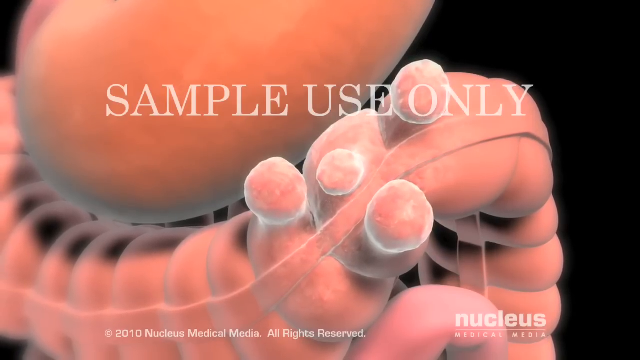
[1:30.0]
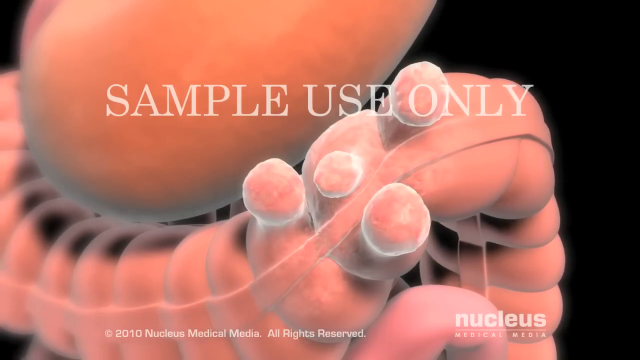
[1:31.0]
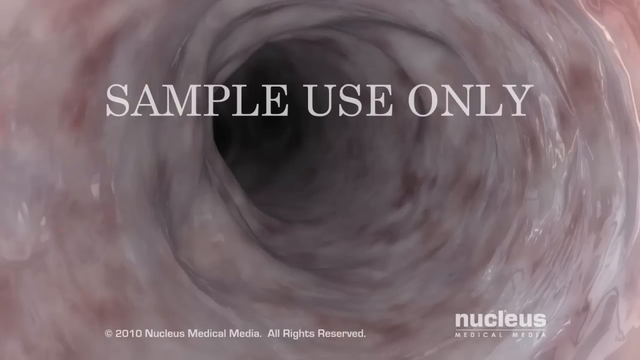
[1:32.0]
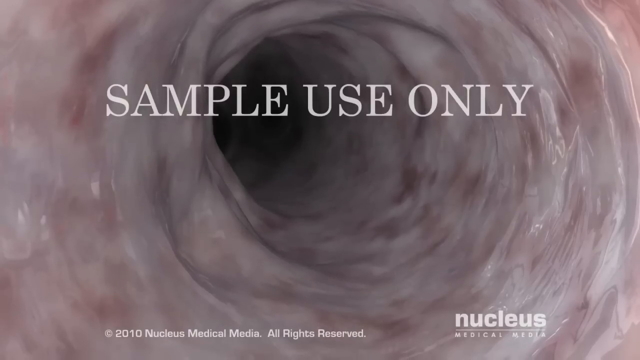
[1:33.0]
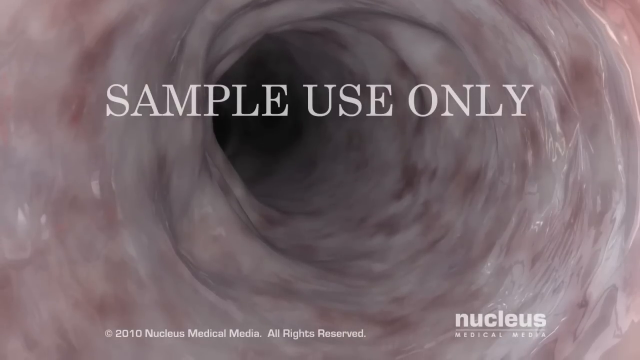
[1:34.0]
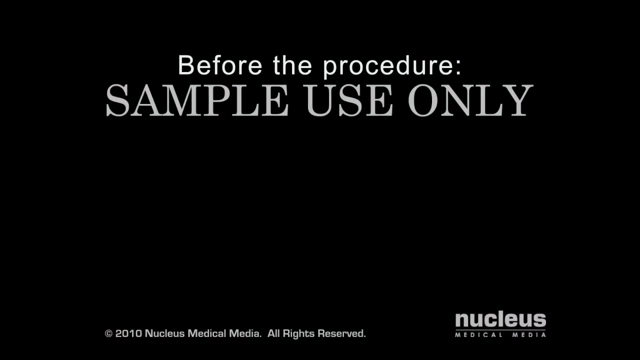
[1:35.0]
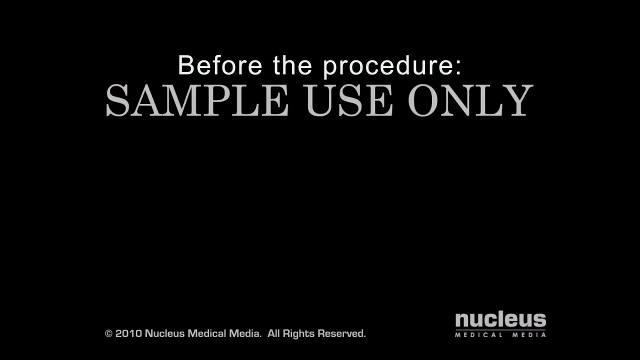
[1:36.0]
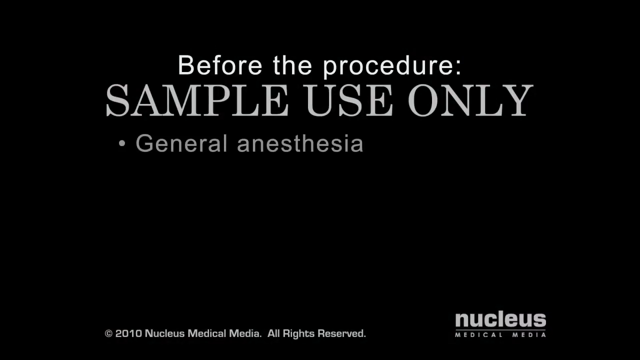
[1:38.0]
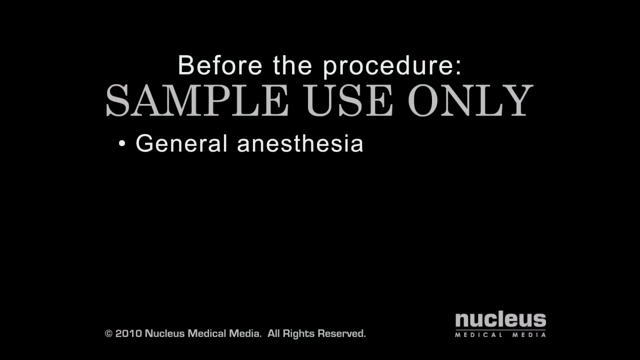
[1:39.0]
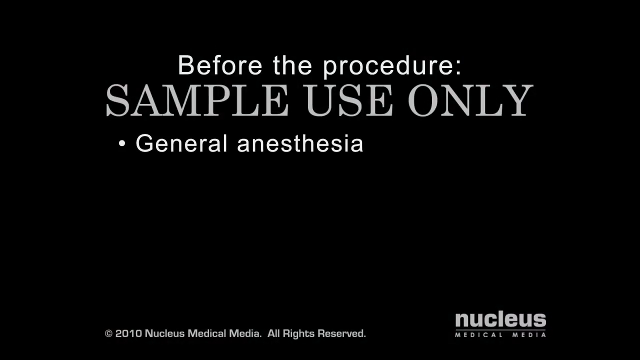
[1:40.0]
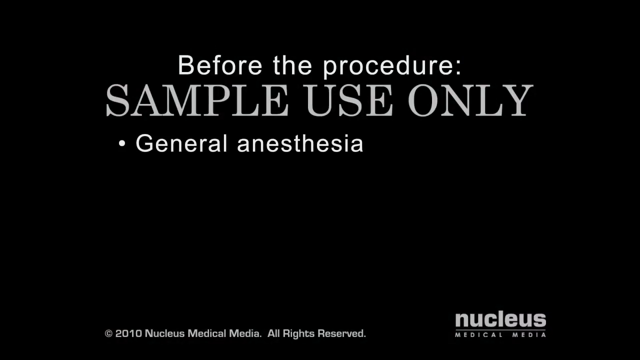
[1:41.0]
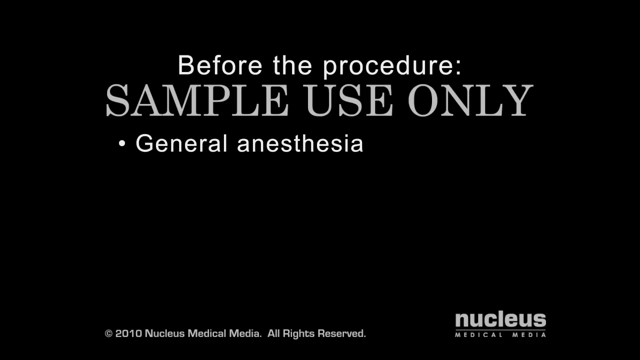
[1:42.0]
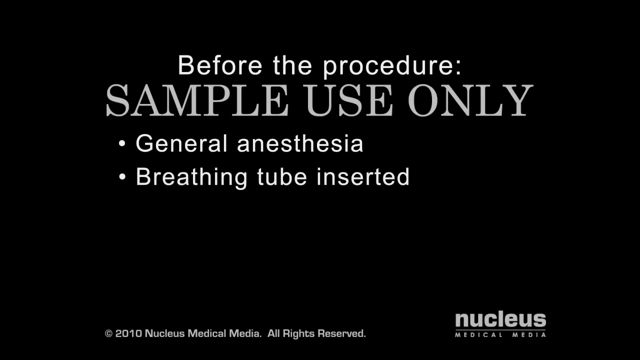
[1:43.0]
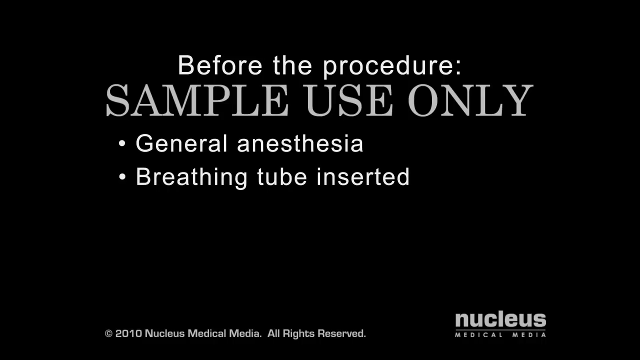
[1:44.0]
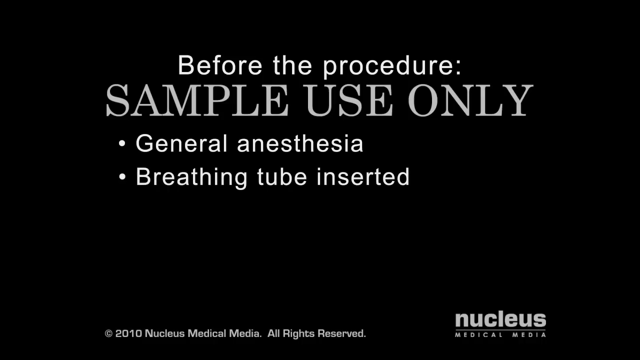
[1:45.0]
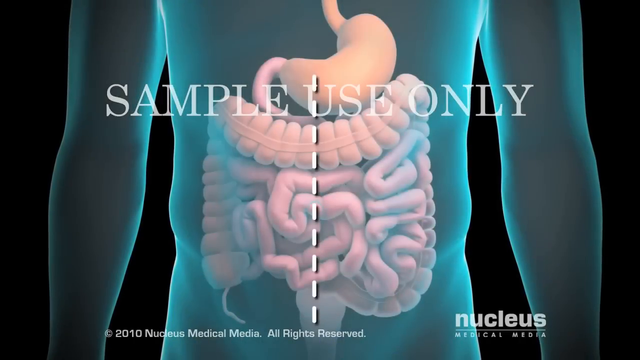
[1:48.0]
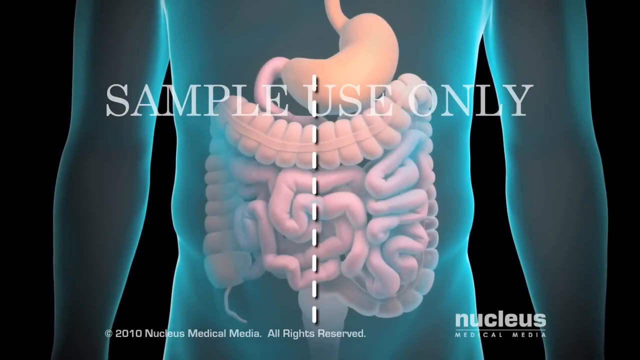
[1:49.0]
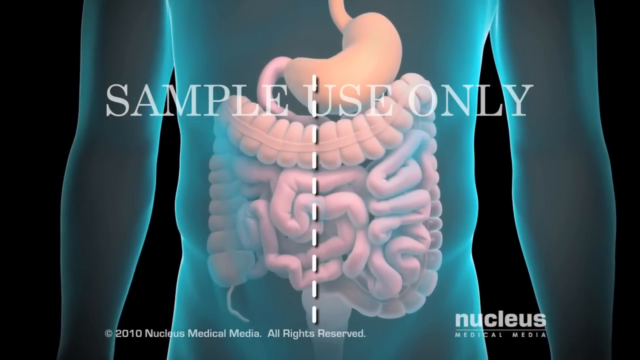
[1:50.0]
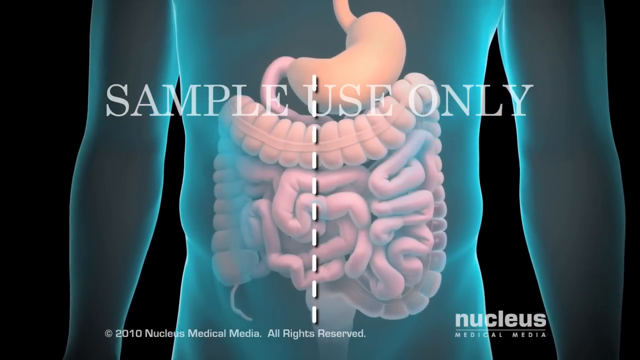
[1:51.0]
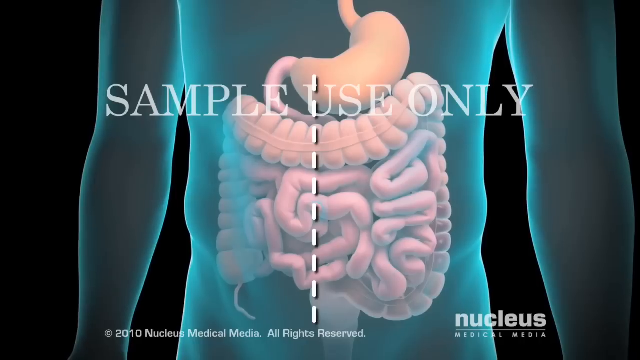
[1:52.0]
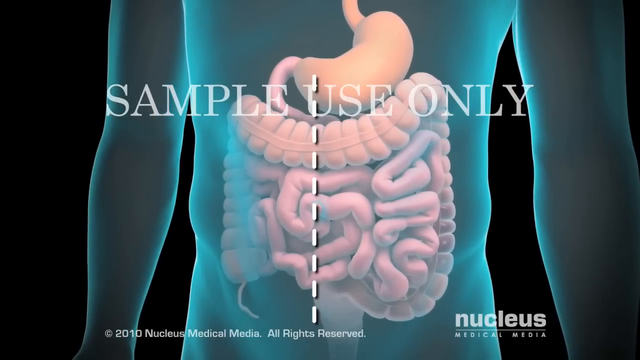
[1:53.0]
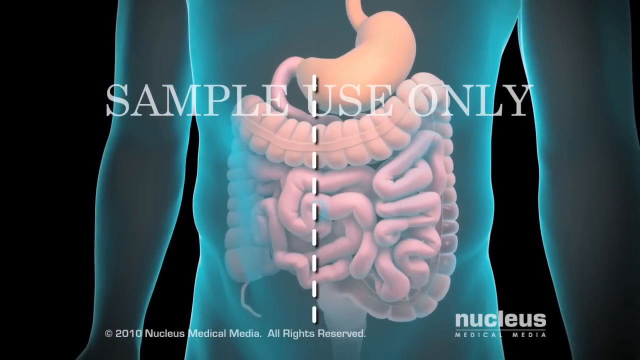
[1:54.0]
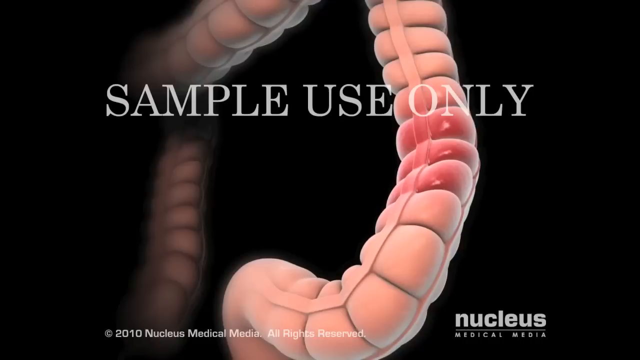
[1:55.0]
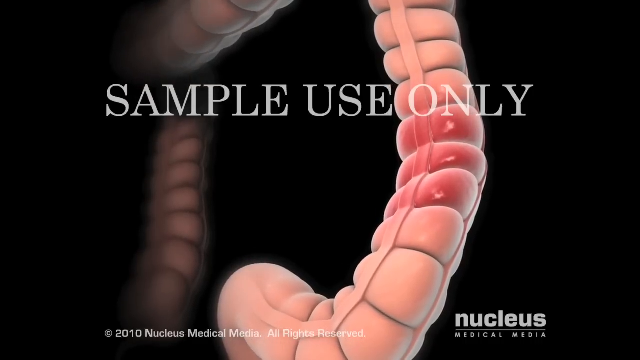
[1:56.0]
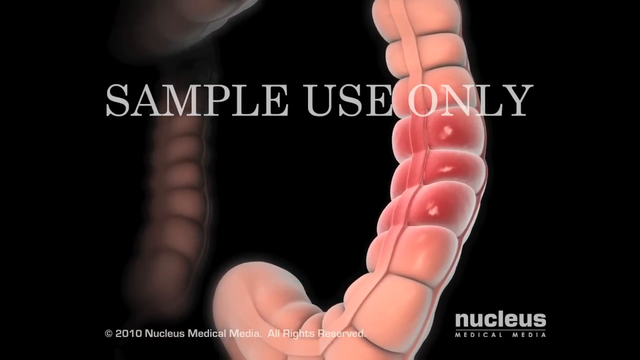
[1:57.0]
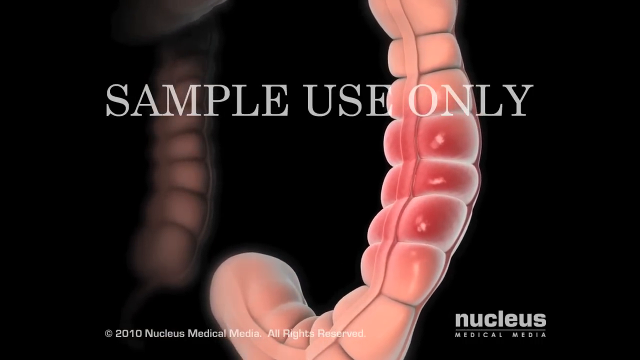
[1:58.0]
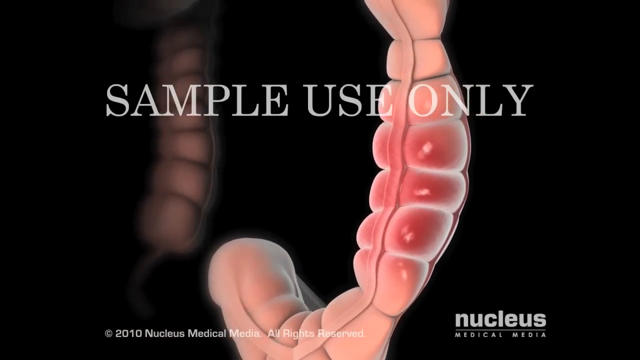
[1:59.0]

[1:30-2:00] "Sample use only" appears in white letters across the top in all caps. The inside of a colon is shown, with the text "before the procedure" and the fleshy inner part of the colon visible. A screen then lists the bullet points "general anesthesia" and "breathing tube inserted." A blue, see-through model of a body shows the intestine inside, and a white dotted line divides the body into two. The body turns very slowly toward a close-up of an infected intestinal part: three small sections next to each other, redder in color than the peach healthy sections. As the model keeps moving, small, bulbous growths are visible on the outside. Then the fleshy inside of an actual human intestine, not a model, is shown.